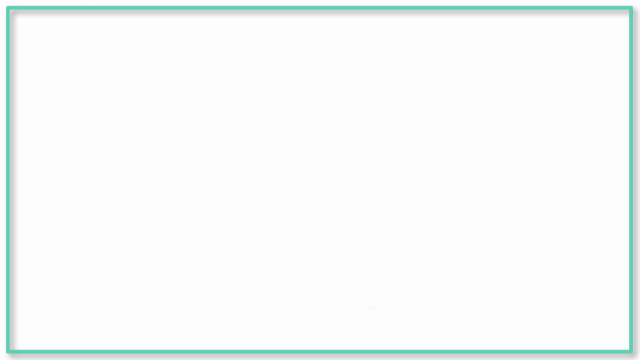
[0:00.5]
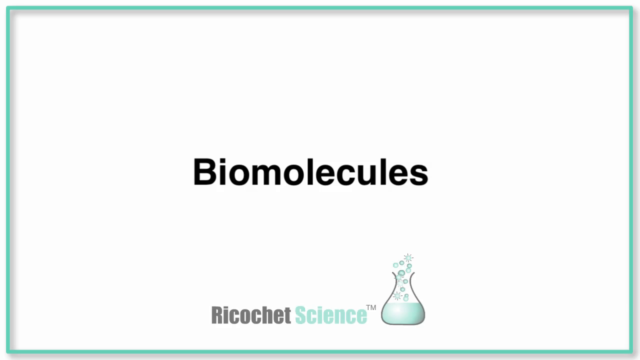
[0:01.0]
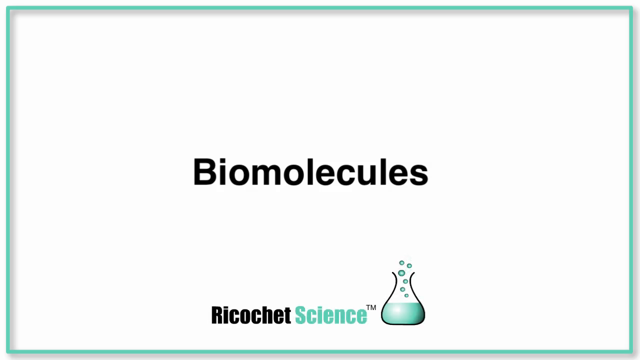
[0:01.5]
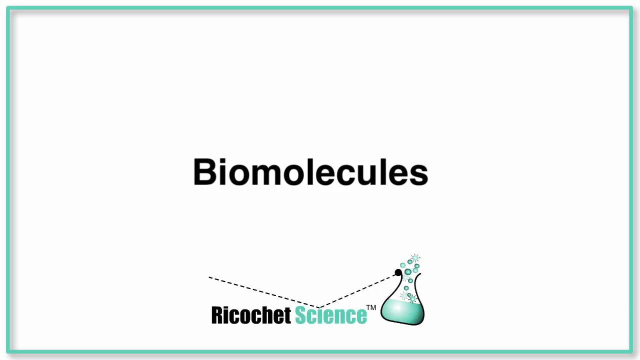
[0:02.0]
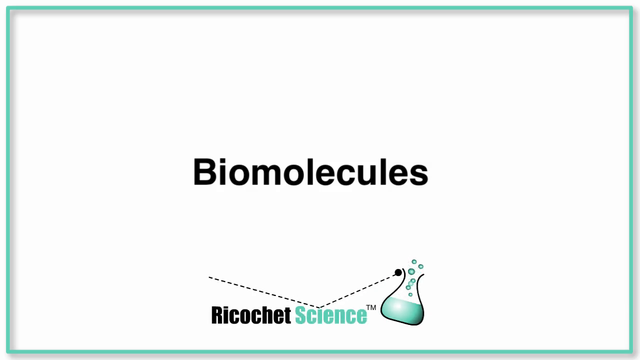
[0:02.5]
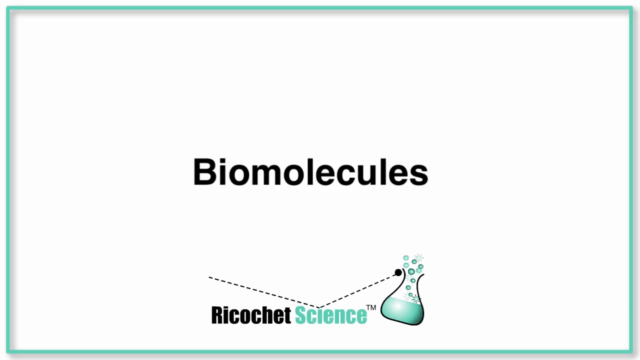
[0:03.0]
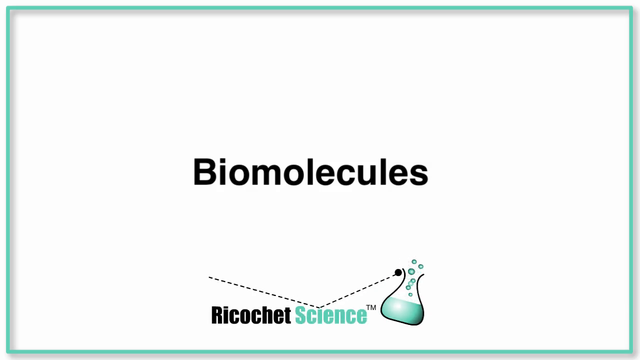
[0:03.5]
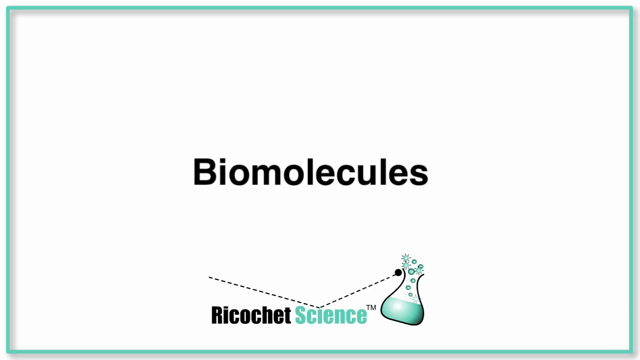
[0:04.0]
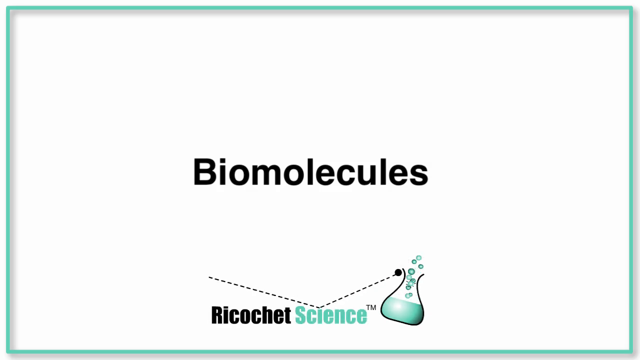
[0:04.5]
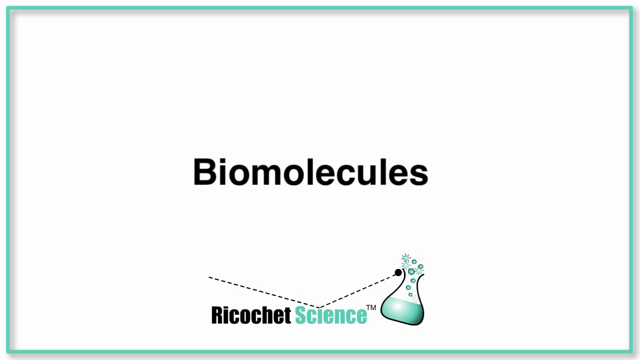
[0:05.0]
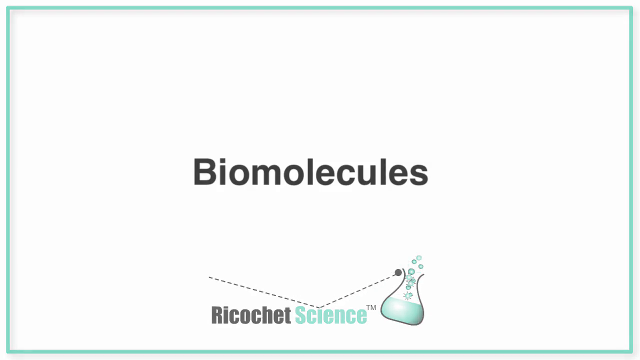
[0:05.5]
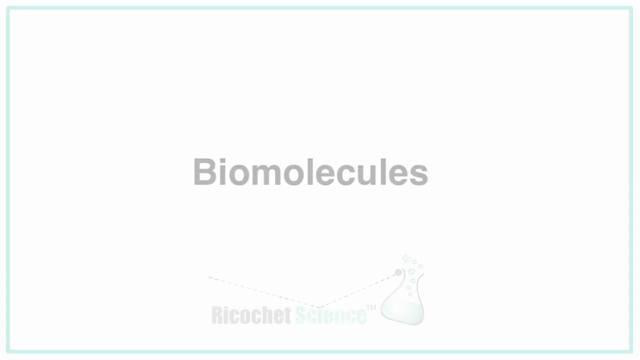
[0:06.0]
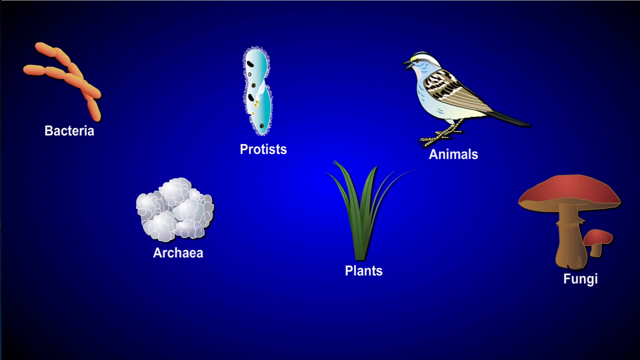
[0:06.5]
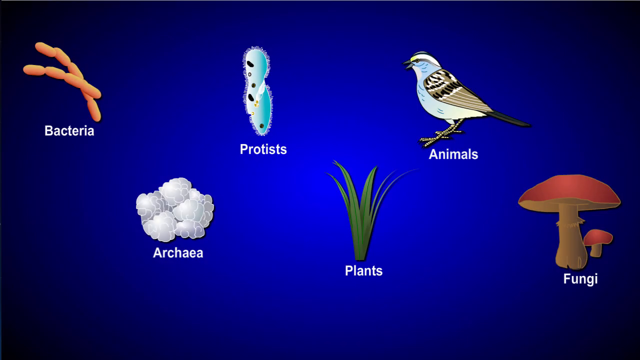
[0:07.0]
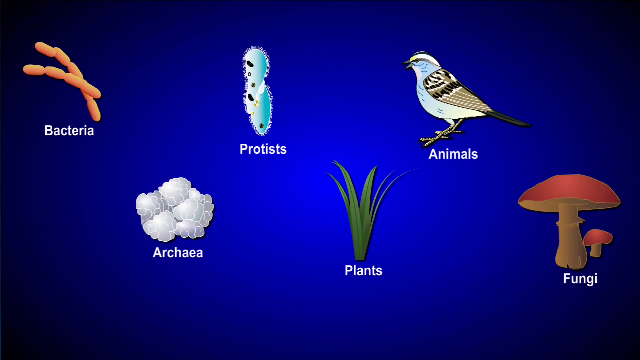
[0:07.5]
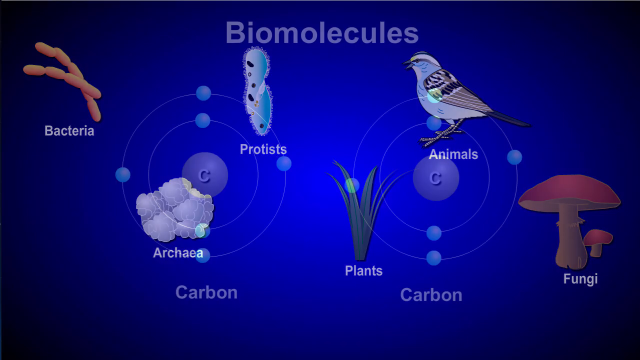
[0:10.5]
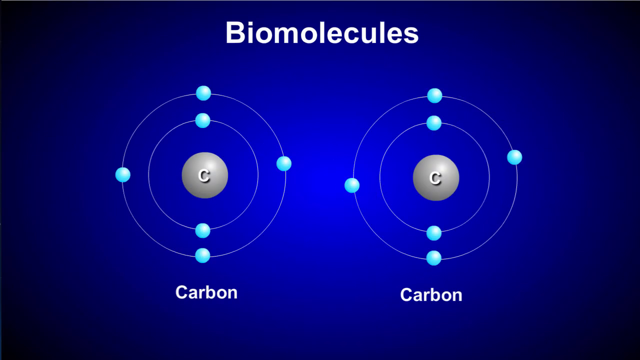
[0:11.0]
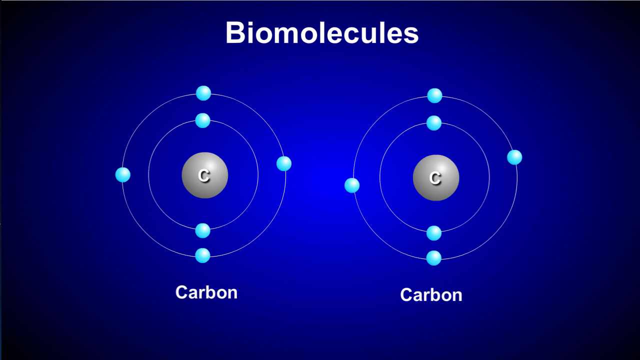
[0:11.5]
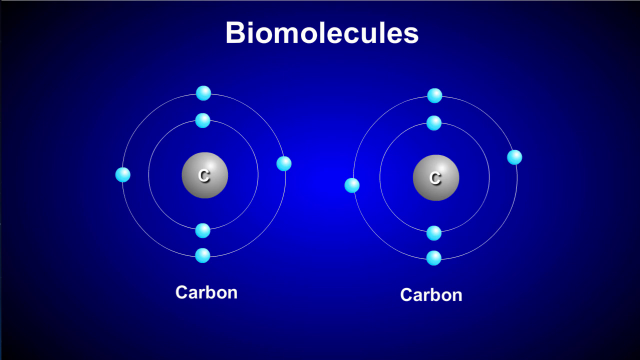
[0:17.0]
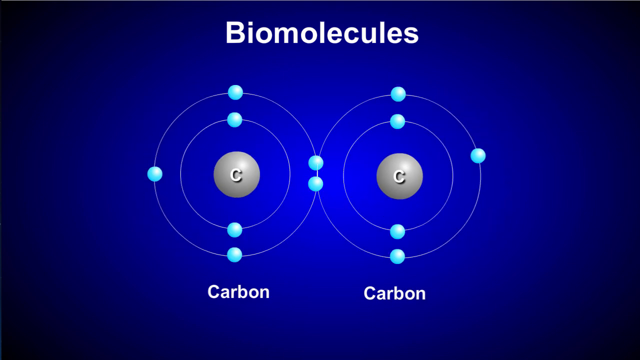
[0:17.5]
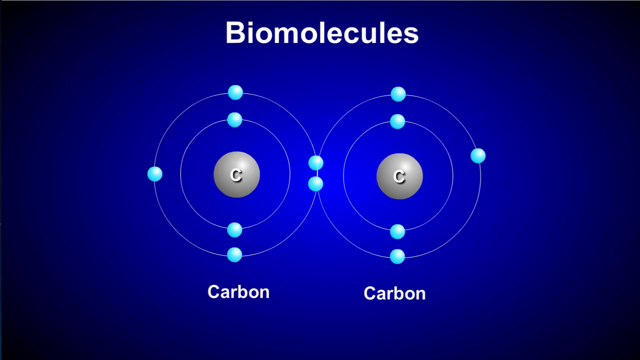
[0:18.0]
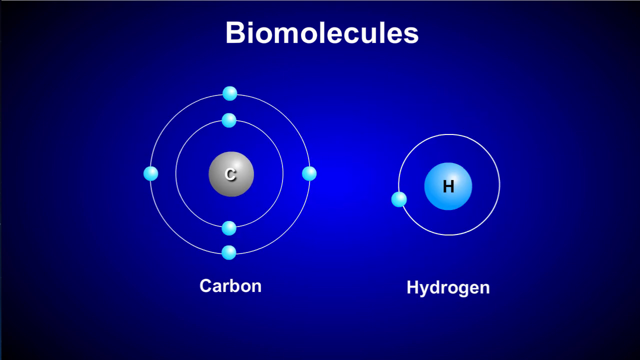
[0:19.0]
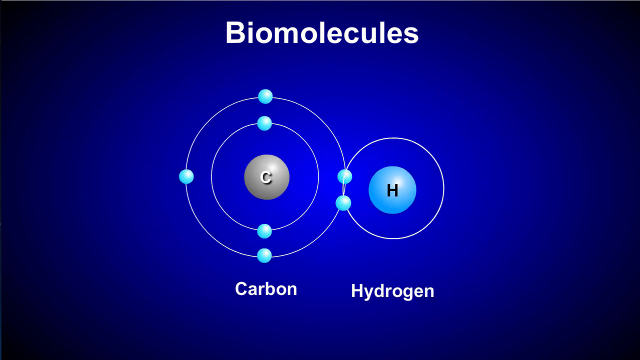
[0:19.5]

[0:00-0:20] The screen first shows a biomarker, then indicates that there are many different types of bacteria and archaea, among others. A set of two biomarkers is shown, with molecules arranged in a specific order.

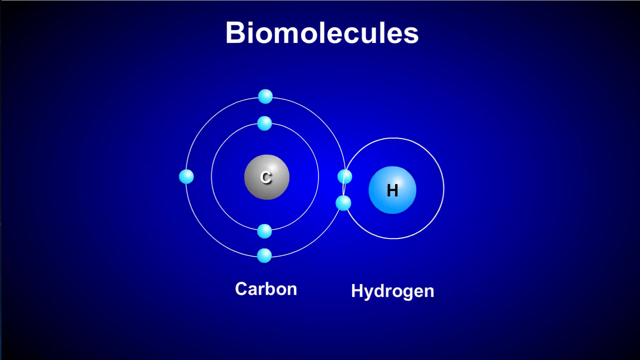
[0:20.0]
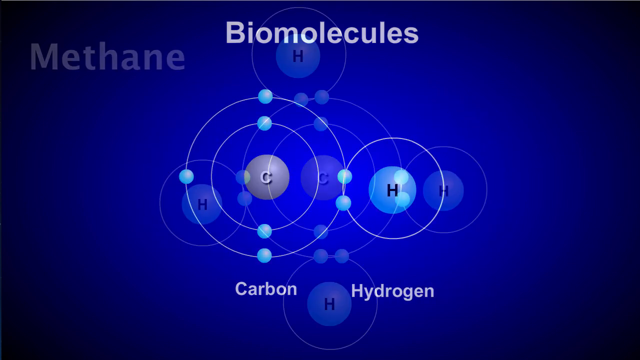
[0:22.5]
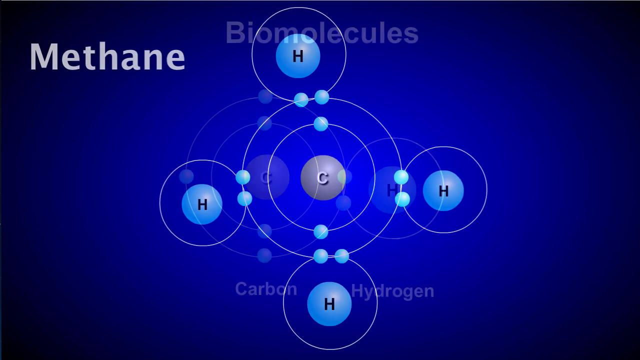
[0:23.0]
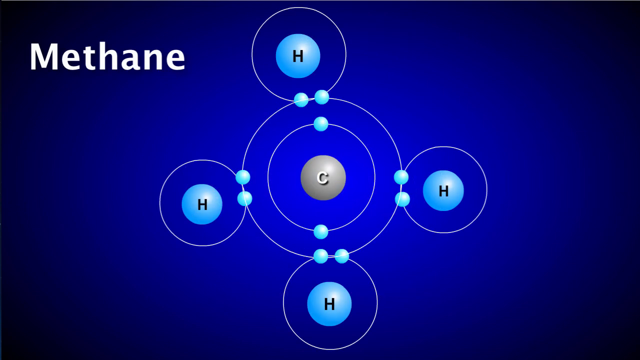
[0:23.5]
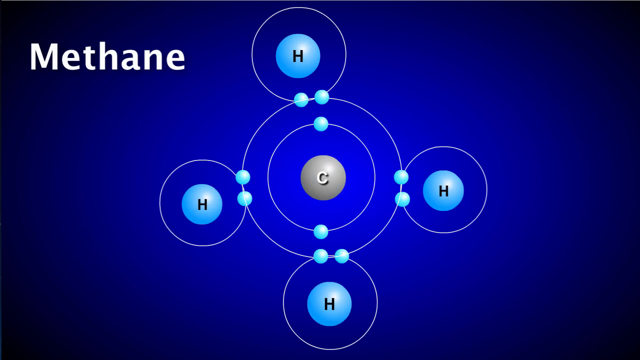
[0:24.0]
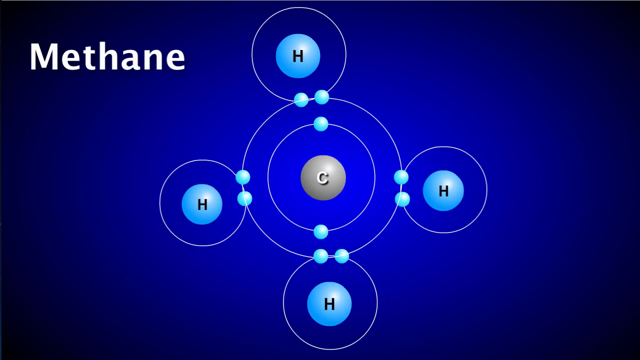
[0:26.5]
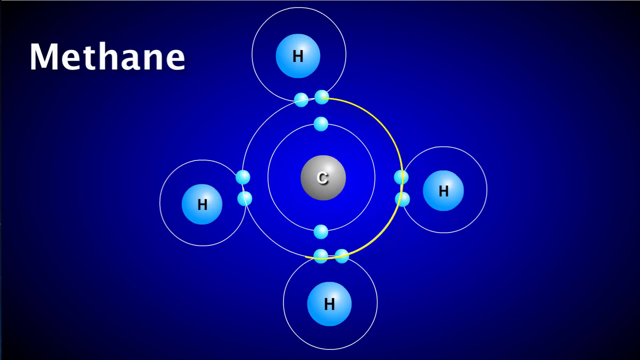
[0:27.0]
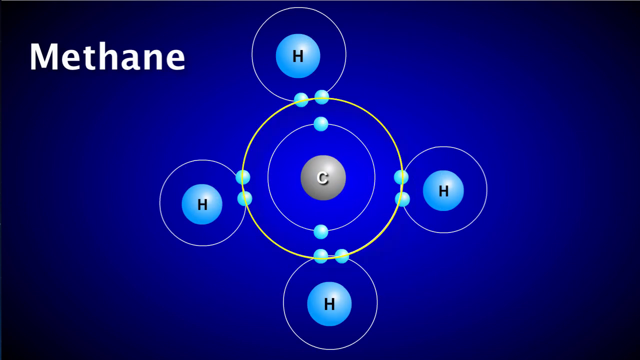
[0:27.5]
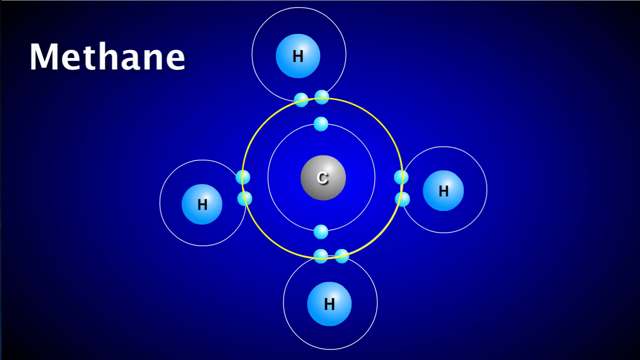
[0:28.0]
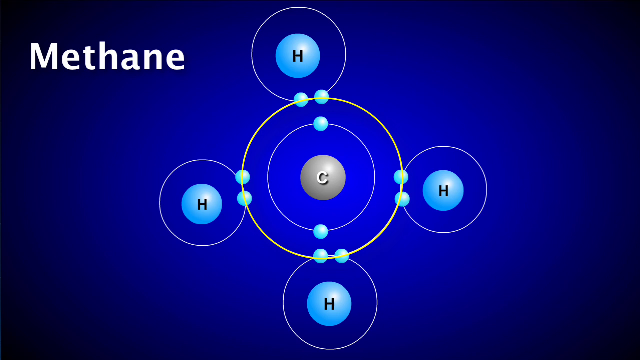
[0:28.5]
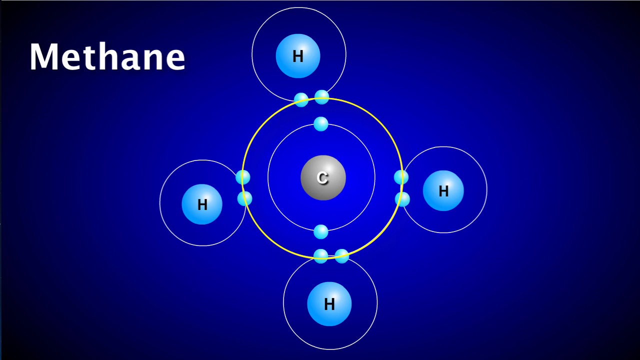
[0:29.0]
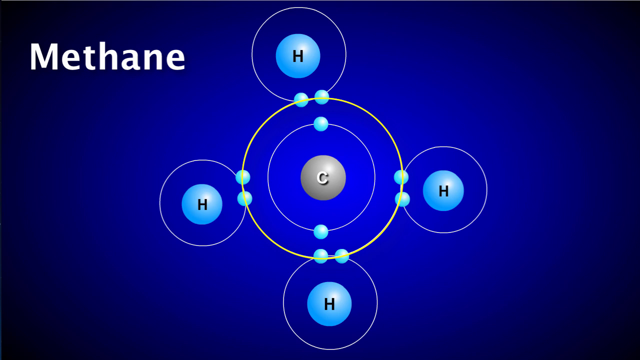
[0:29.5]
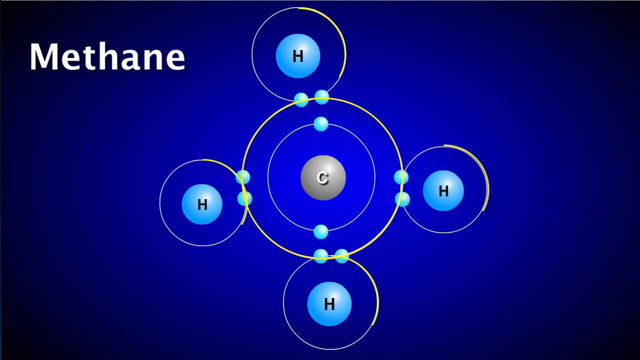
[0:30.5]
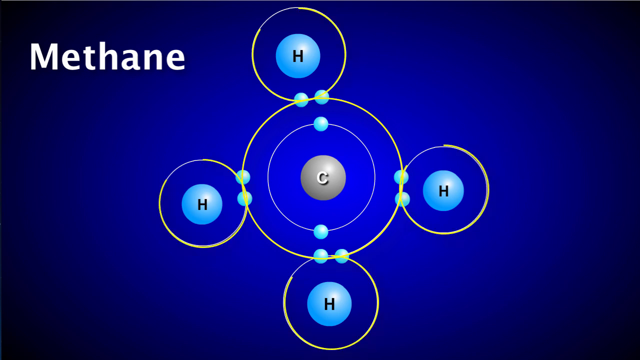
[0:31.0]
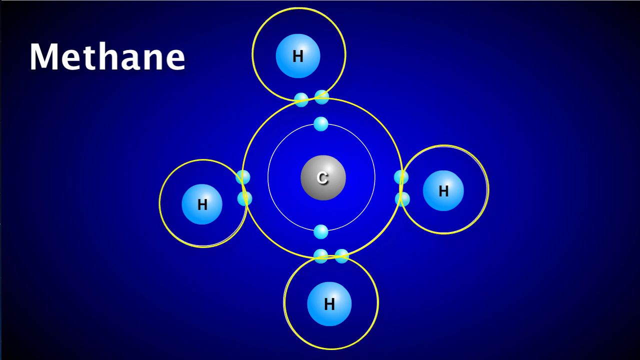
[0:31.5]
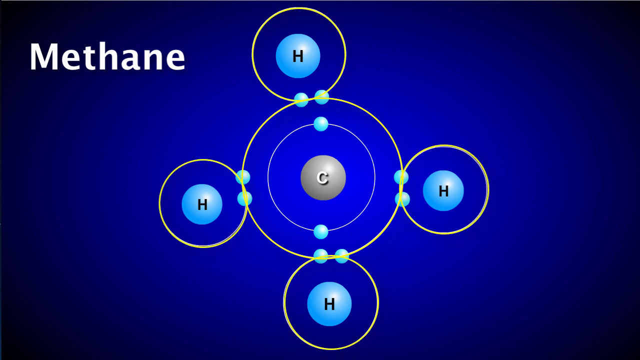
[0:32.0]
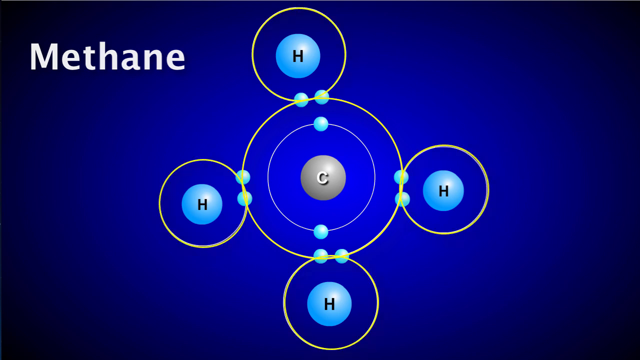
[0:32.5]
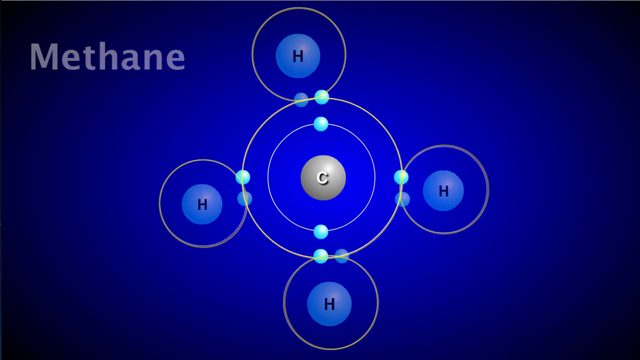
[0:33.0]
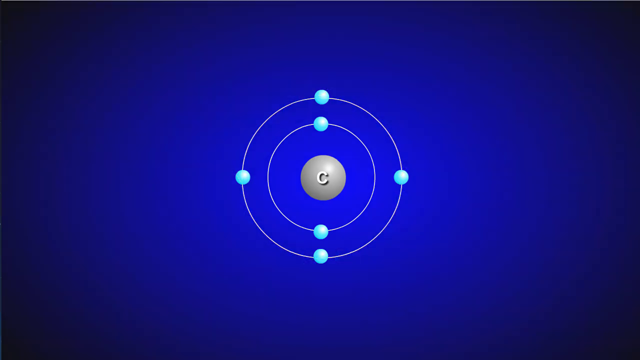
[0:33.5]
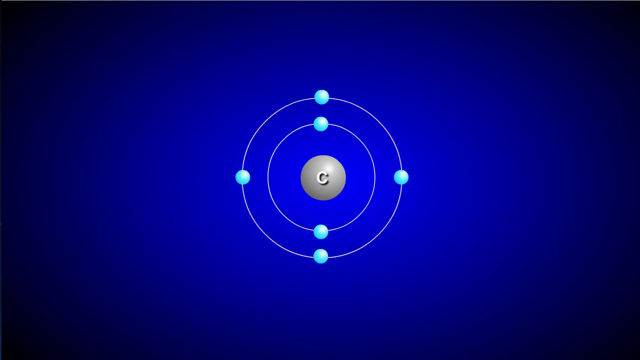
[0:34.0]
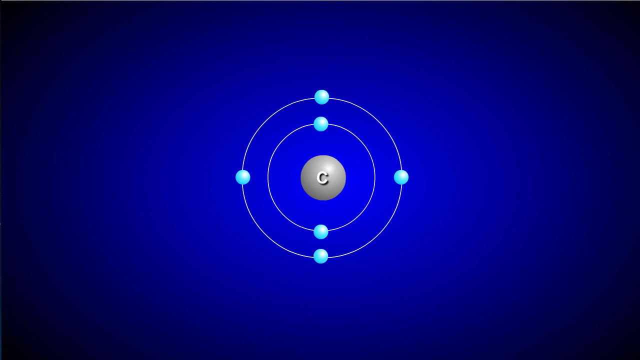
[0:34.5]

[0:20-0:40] Various biological molecules are shown, including methane. Formations appear on the four distinct corners of a graphene molecule, with molecules in various areas of it. Molecules are next to each other, sharing electrons.